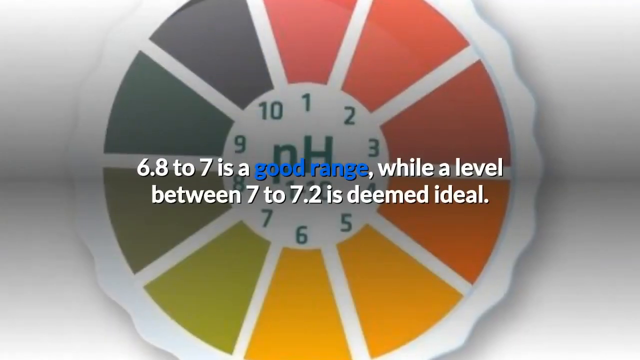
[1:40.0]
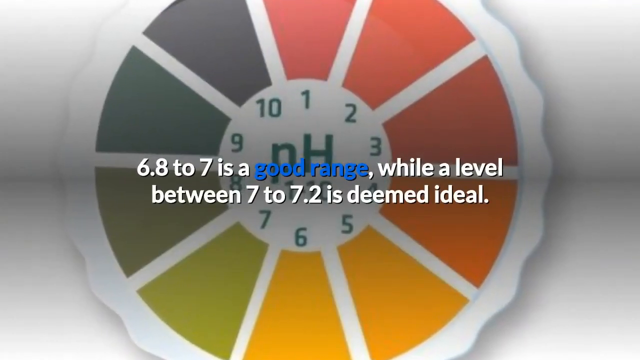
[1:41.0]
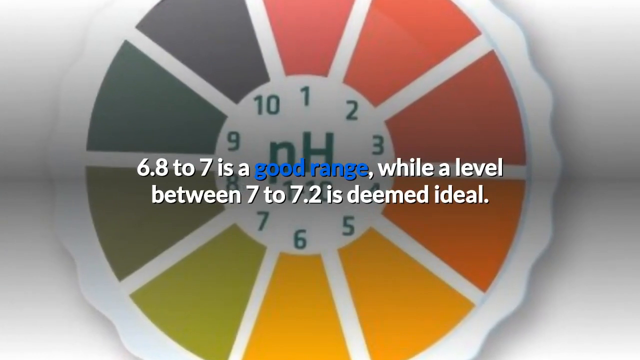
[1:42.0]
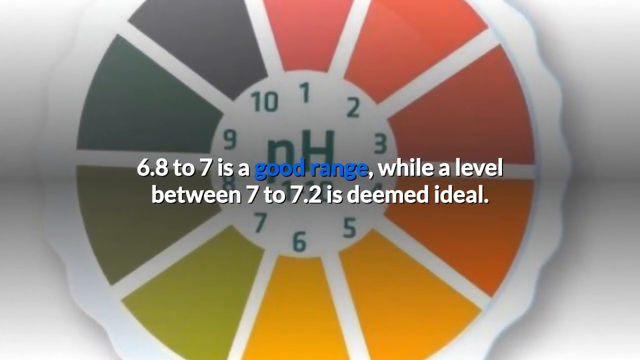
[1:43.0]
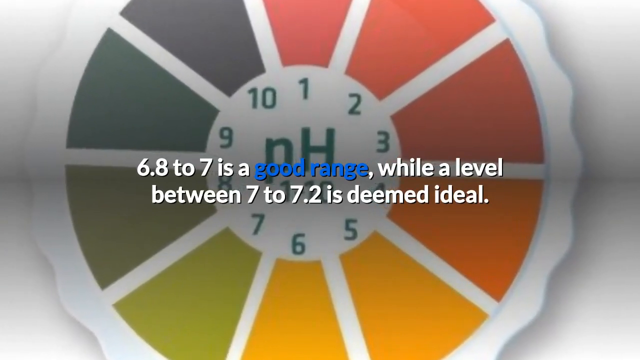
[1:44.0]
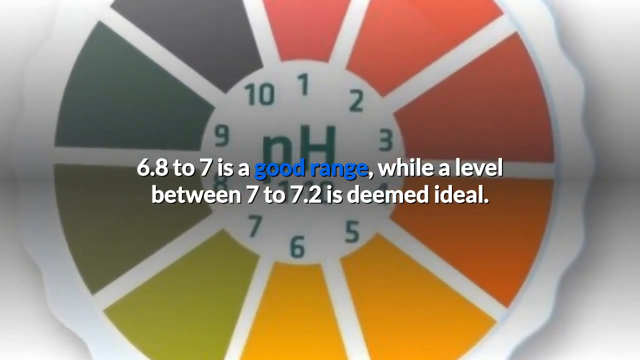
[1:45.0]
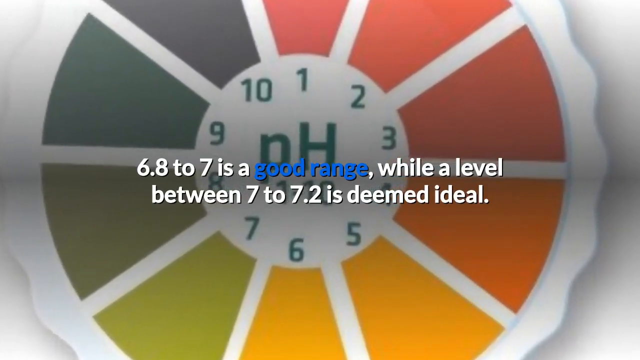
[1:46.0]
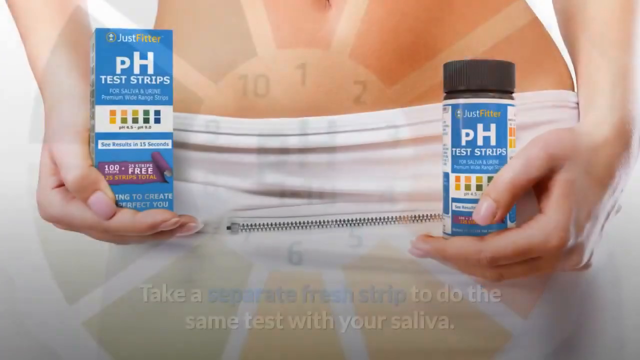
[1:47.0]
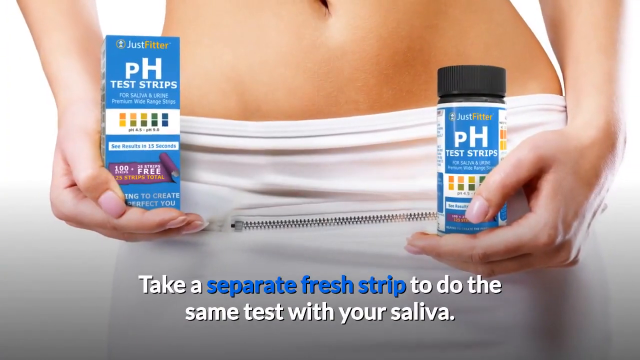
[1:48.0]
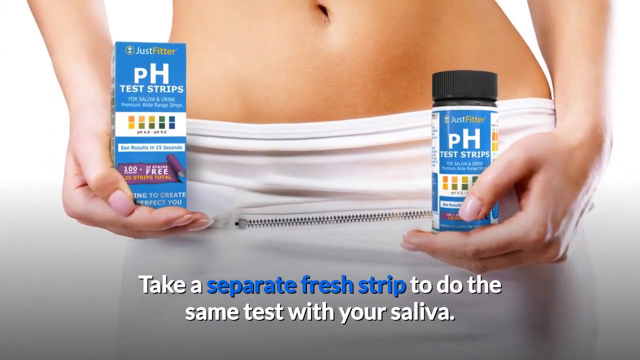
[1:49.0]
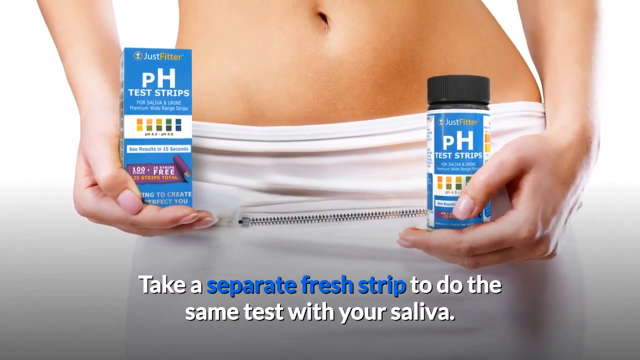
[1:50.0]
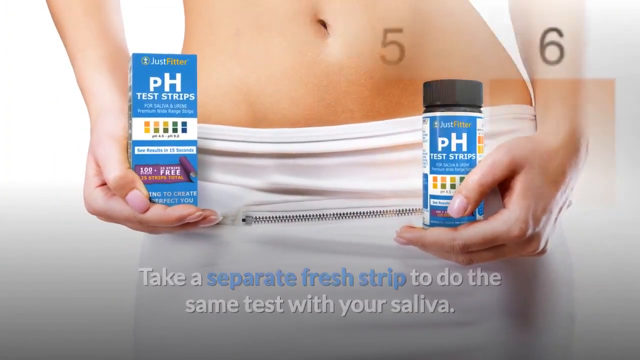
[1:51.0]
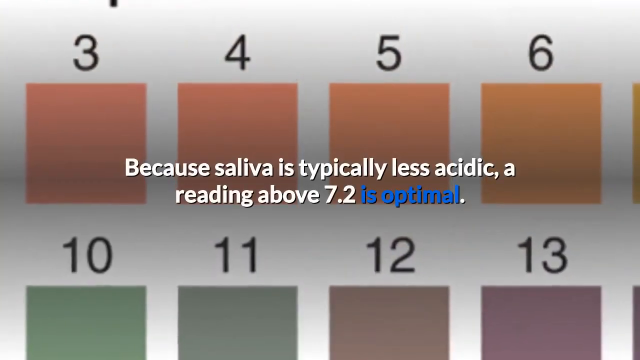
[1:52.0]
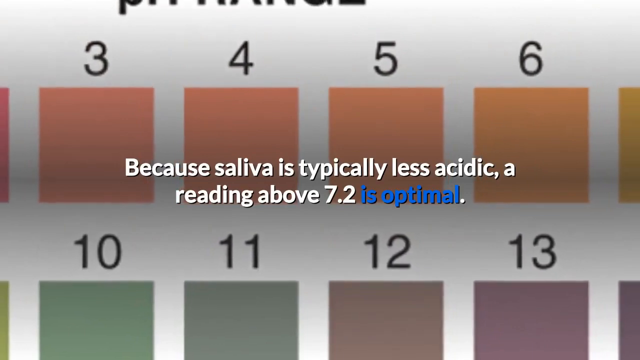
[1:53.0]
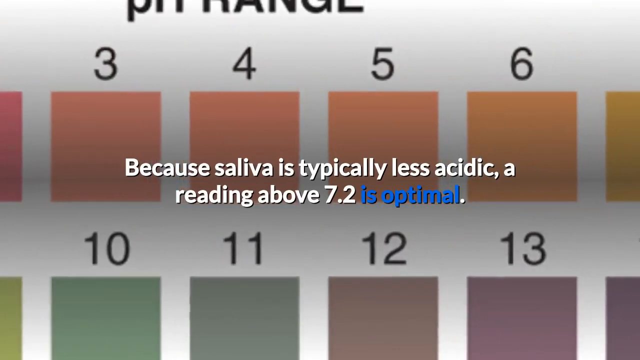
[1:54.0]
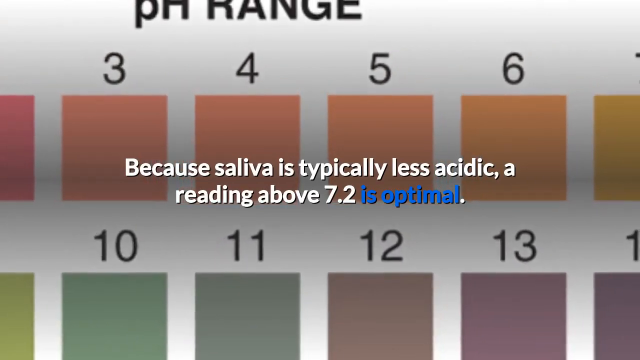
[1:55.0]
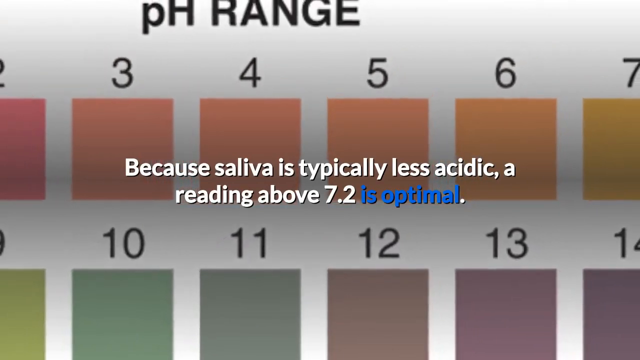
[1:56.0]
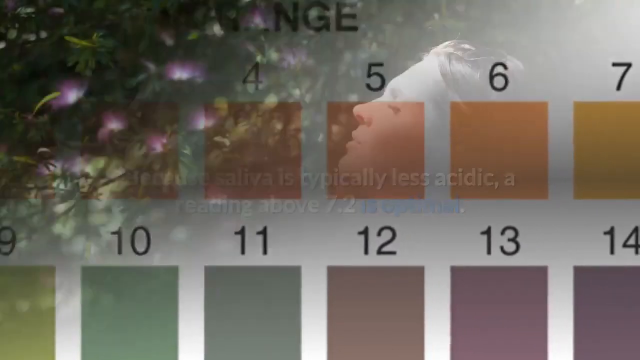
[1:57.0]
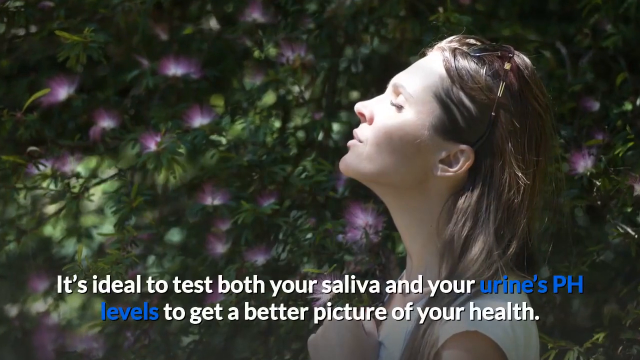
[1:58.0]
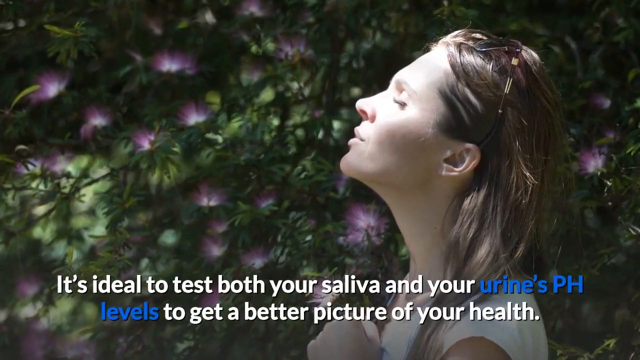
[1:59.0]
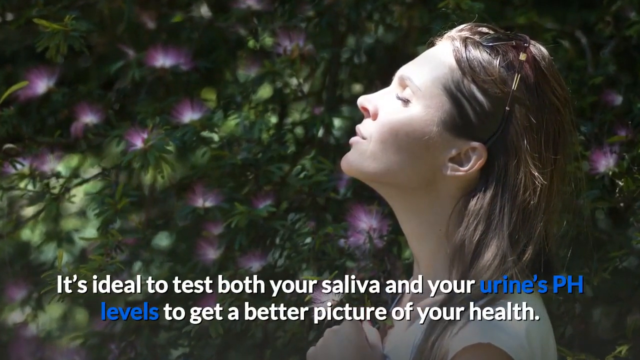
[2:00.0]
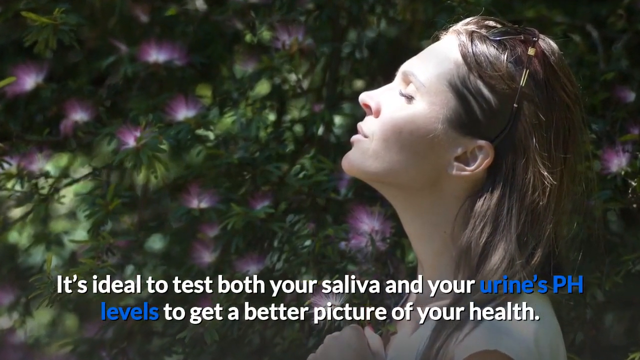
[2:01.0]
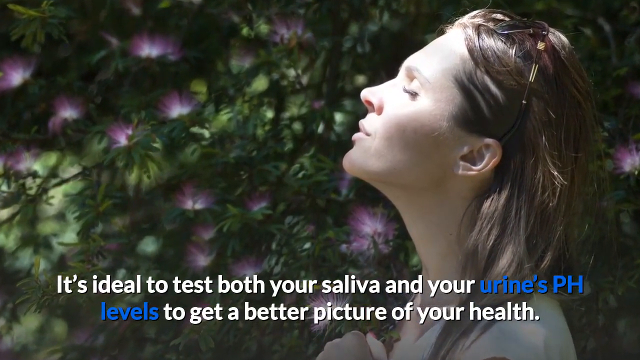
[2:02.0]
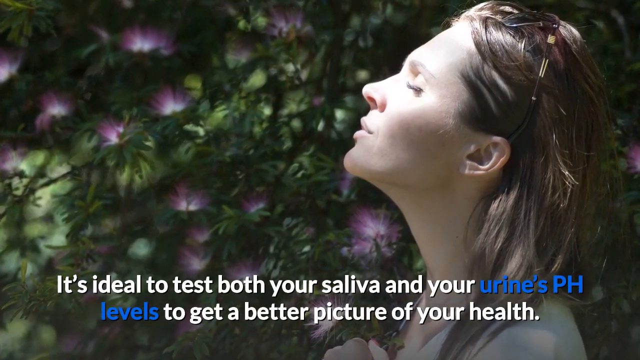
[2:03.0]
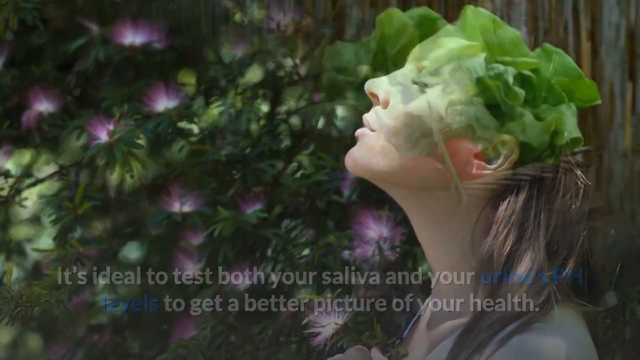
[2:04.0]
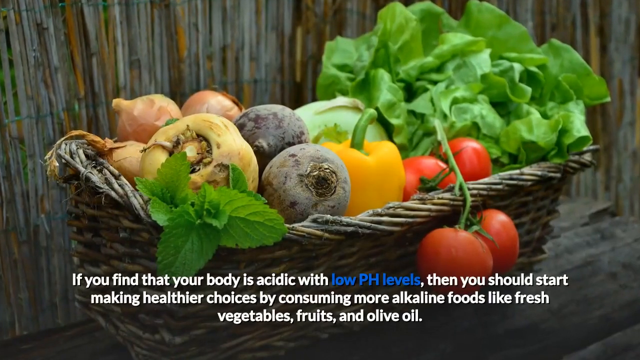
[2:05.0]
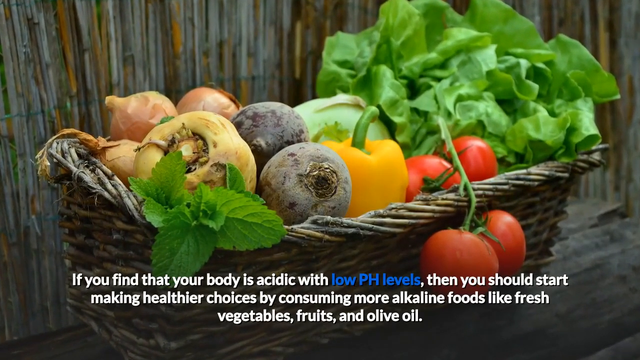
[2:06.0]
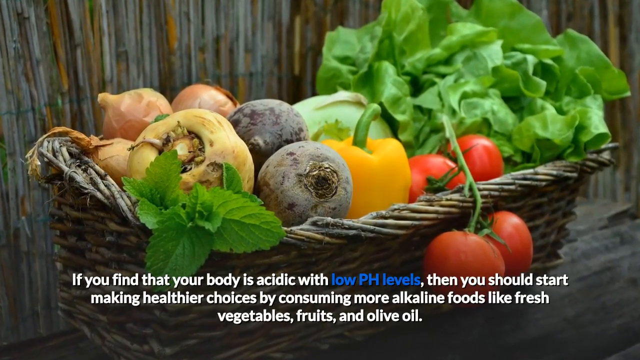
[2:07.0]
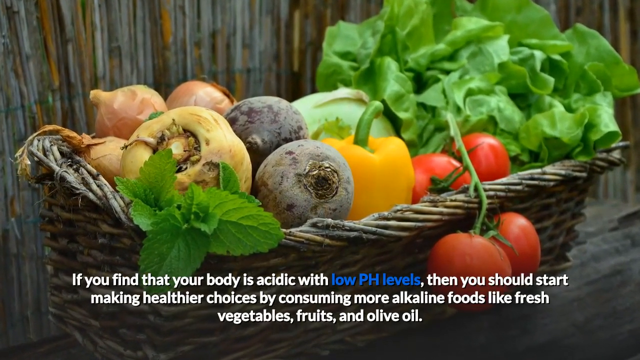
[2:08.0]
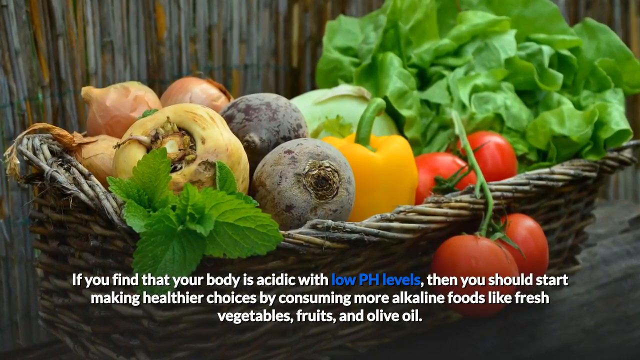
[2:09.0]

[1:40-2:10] A wheel is displayed with the numbers 1 through 10, each number's section in a different color, and the middle reads "pH 1 through 10." A caption in the center of the screen reads "6.8 to 7 is a good range while a level between 7 to 7.2 is deemed ideal," with "good range" in blue. The camera zooms in on the wheel behind the caption. The video then cuts to an image of someone holding a black bottle that says "pH test strips" in their left hand and a box that says "pH test strips" in their right hand; they wear some type of clothing below the waist and do not appear to be wearing a top. Text below reads "take a separate fresh strip to do the same test with your saliva." The camera zooms out, and the video cuts to a screen that reads "because saliva is typically less acidic a reading above 7.2 is optimal."